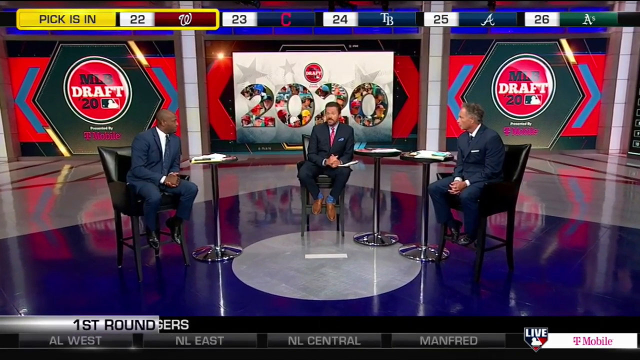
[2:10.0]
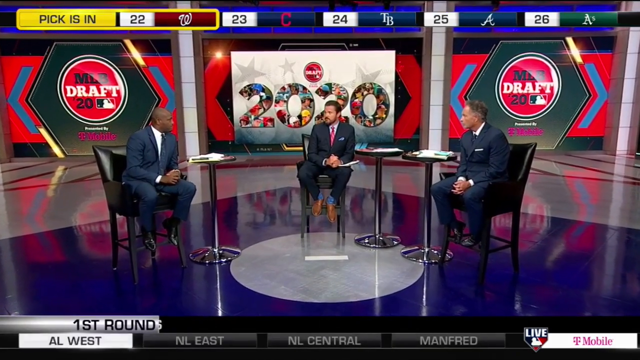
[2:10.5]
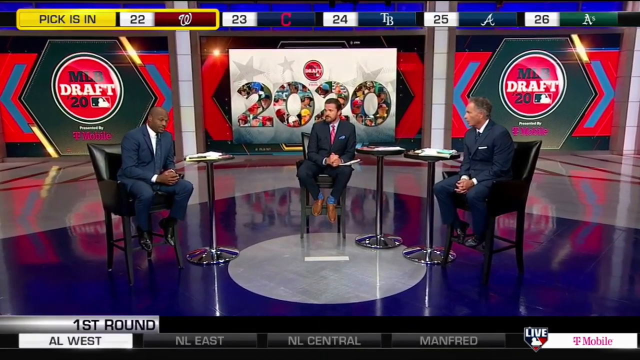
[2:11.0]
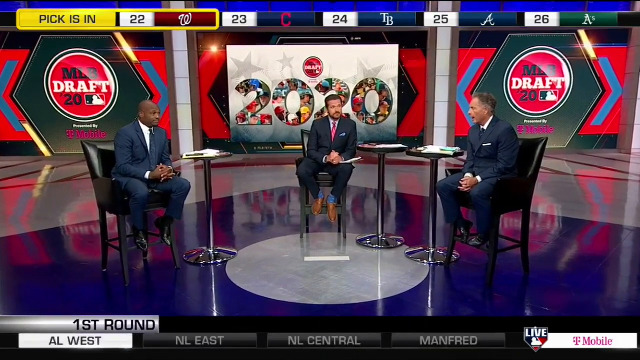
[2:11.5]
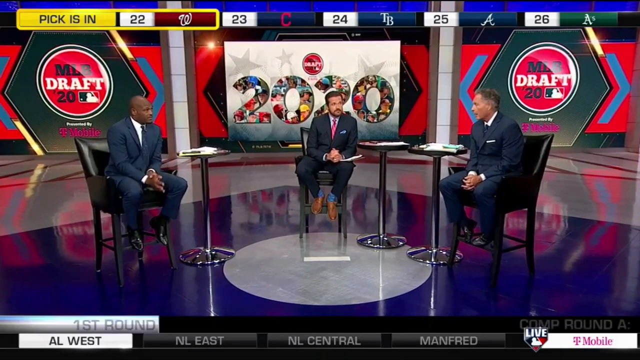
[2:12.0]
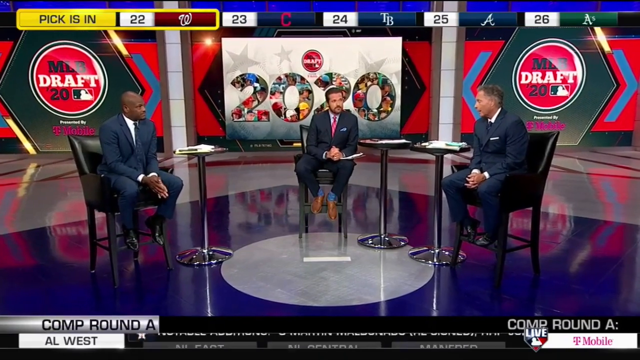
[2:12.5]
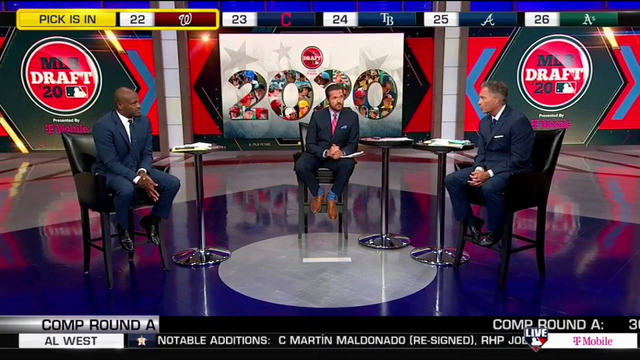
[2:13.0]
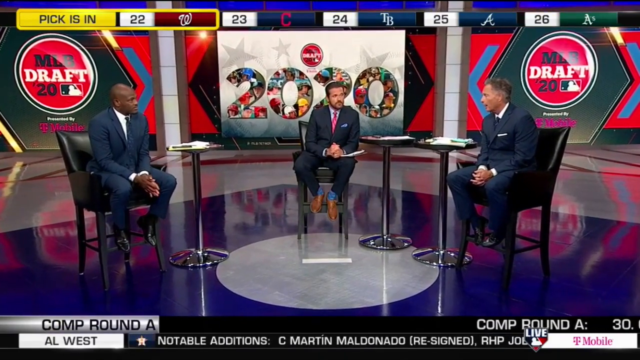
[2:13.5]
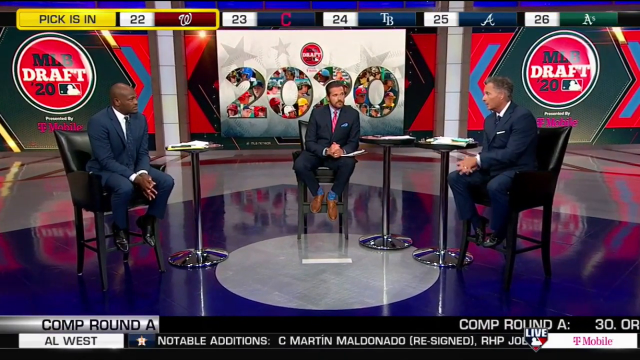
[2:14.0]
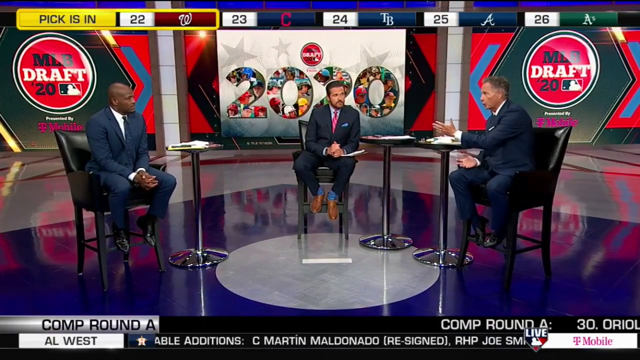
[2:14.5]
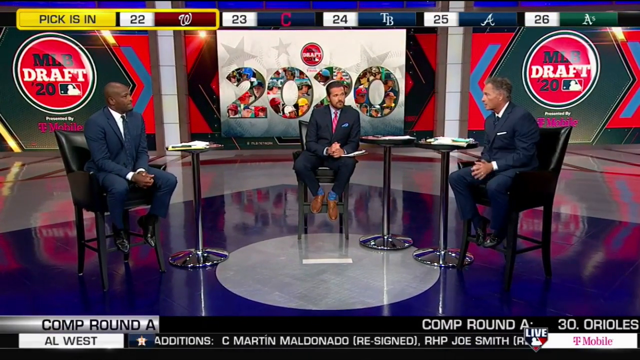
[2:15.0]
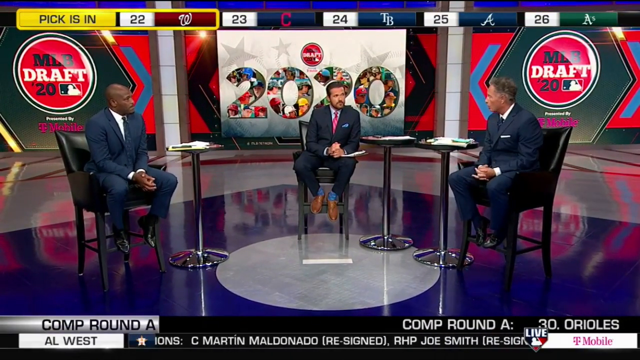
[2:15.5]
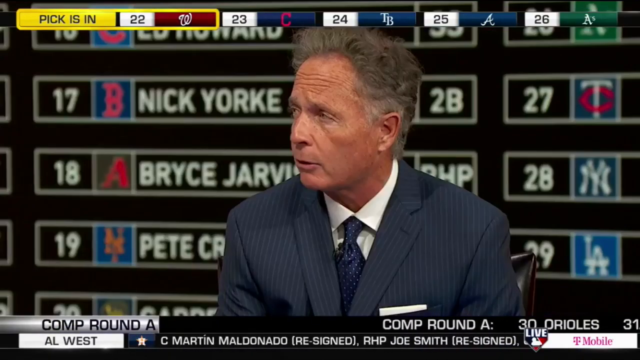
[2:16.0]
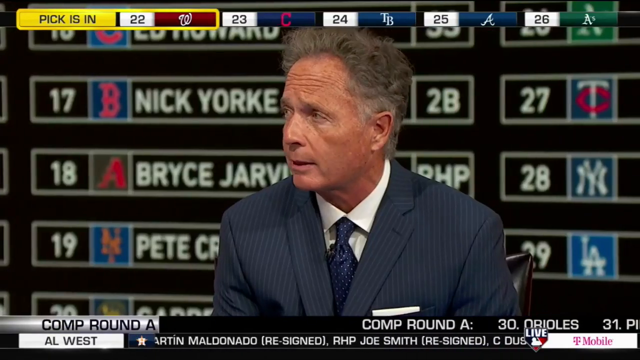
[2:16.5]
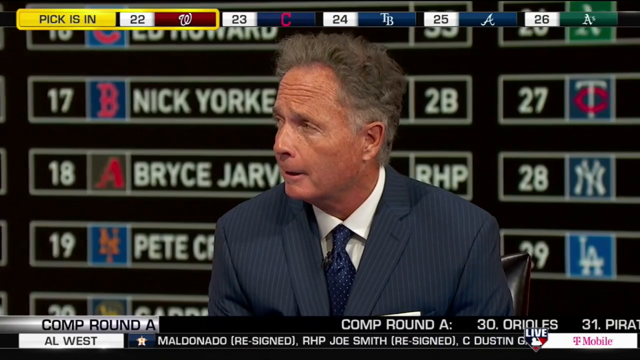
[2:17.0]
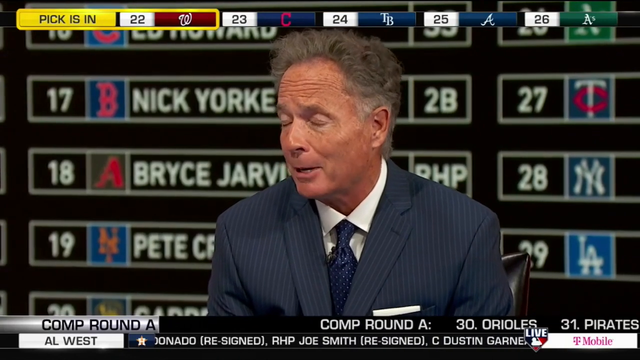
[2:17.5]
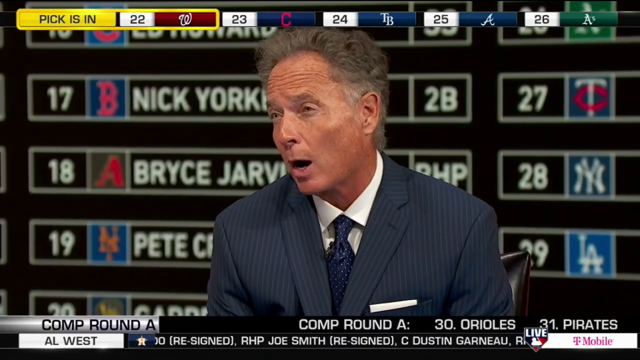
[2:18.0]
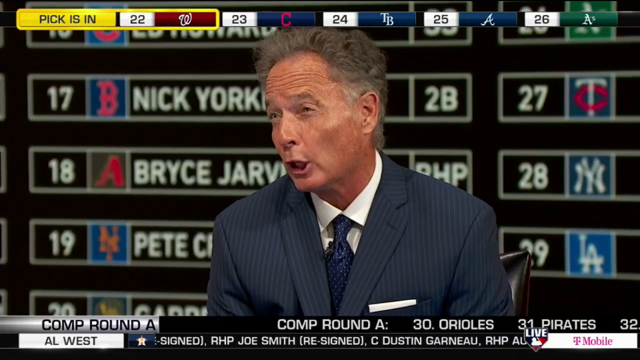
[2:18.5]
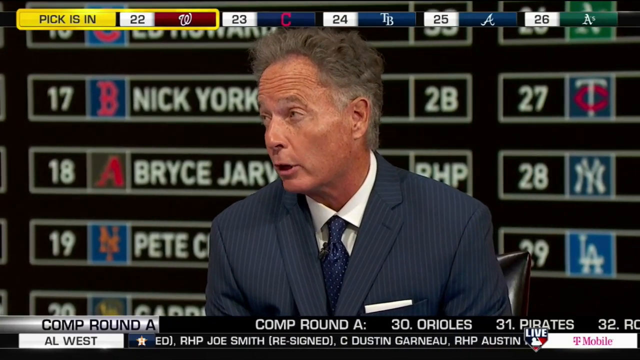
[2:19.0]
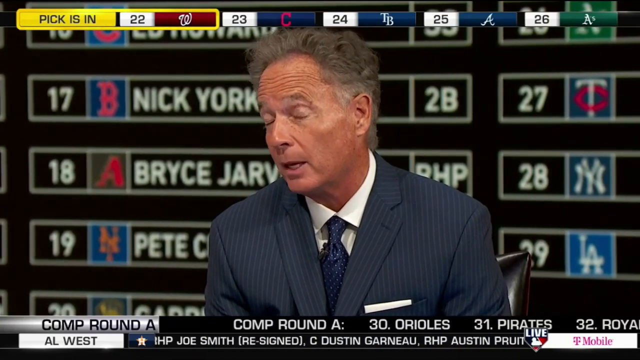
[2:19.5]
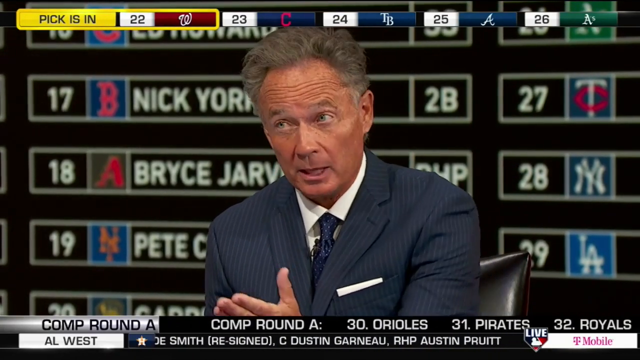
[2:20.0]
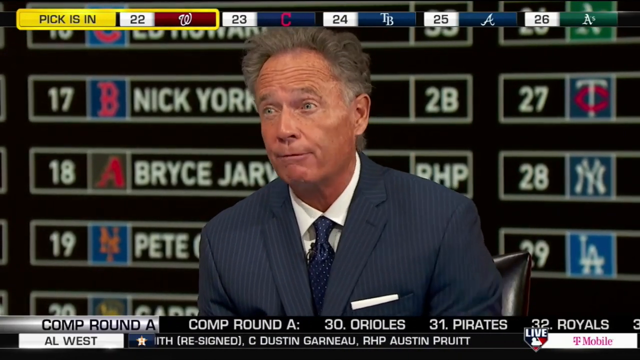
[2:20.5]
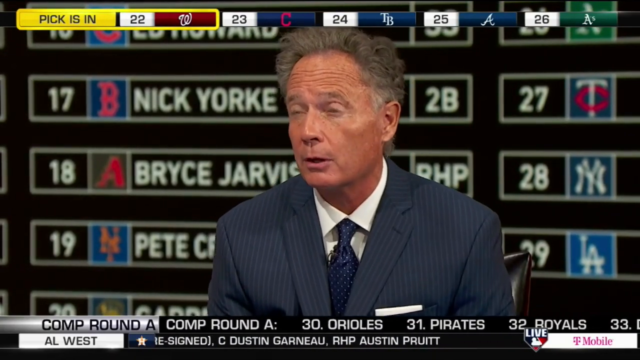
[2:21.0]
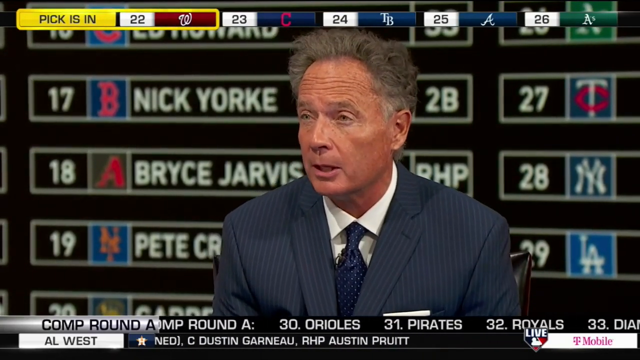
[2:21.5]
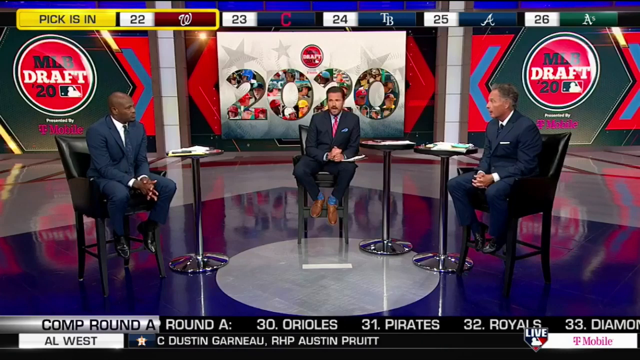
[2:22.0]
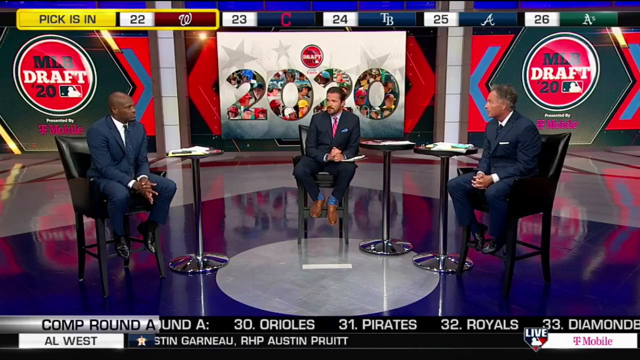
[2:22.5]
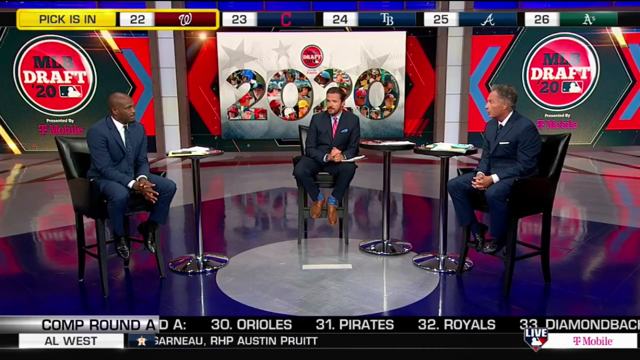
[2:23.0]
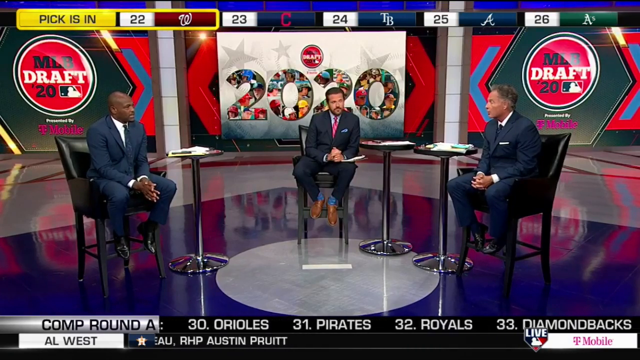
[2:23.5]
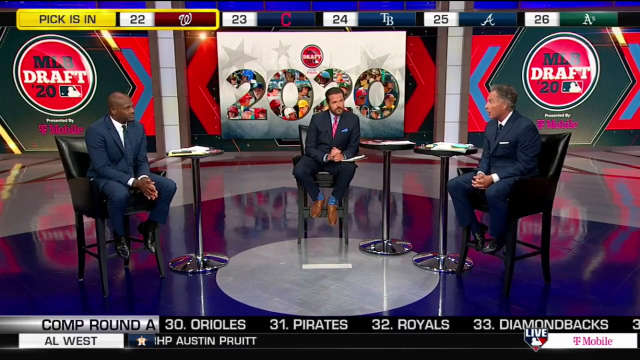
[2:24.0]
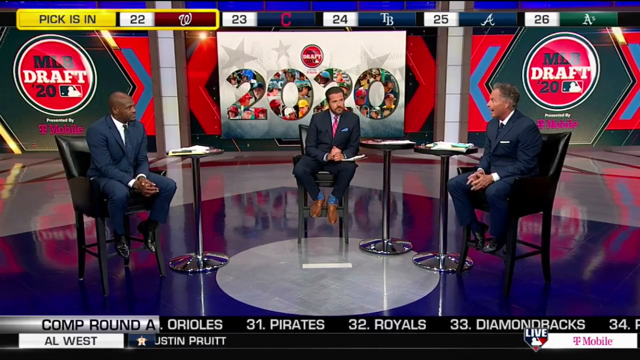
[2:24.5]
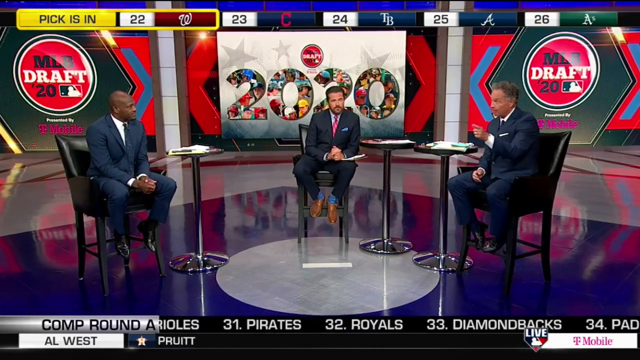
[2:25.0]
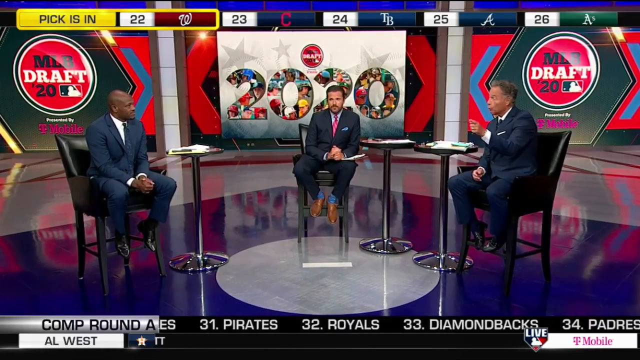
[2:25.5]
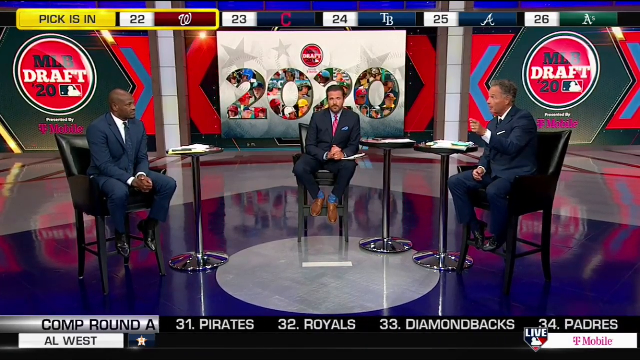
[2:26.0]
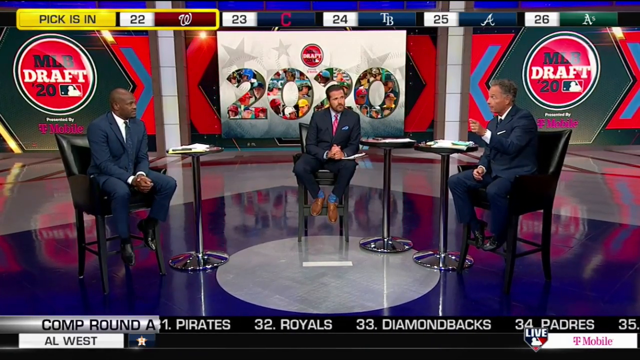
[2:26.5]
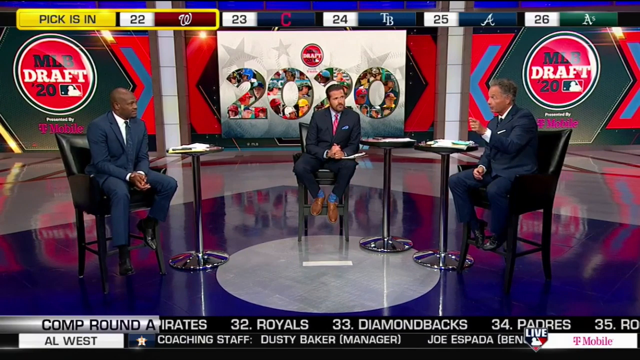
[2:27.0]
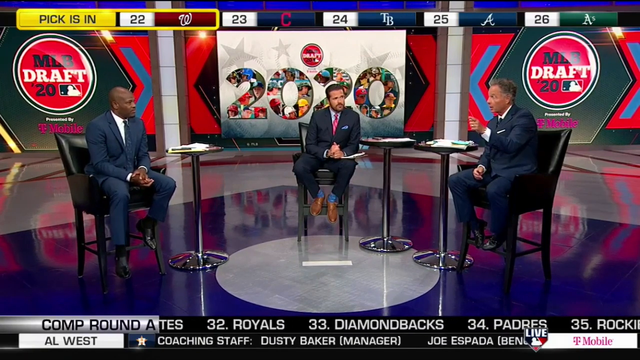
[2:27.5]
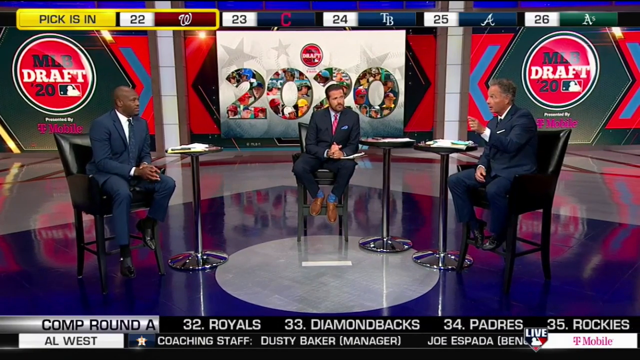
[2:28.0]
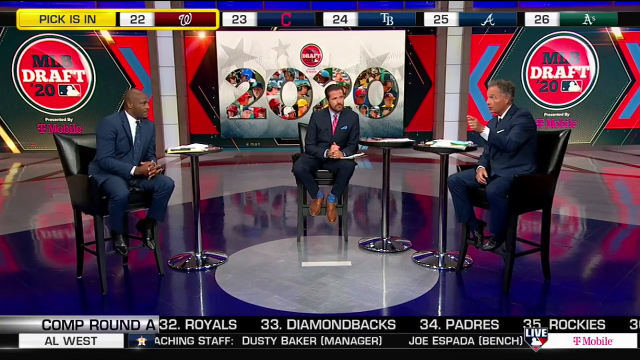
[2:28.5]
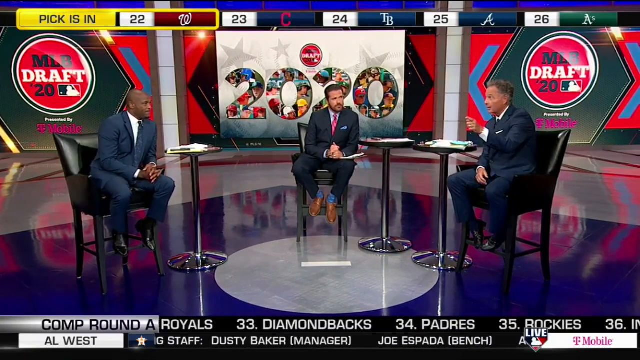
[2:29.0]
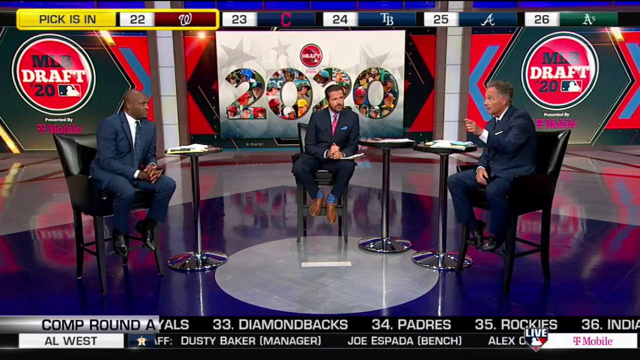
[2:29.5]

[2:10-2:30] The three men sit in a studio with a shiny blue and gray floor that has a circle in its center. Each man sits on a counter-height chair with a small table beside him. Behind them is a graphic showing "2020," flanked on the right and left by graphics reading "MLB Draft 20." The man on the right, who has short gray hair, gestures with his left hand while speaking to the man across from him, nodding slightly. The video cuts to him directly, and behind him is a board listing a number of players, including "Bryce Jarvis," "Nick York" and a name beginning with "Pete," with symbols of baseball teams such as the New York Mets, the Angels and Boston. It cuts back to the three men continuing their discussion as the gray-haired man gestures and points with his left hand while nodding. The man with dark skin leans forward, rubs his hands together, and acts interested in what the gray-haired man has to say.